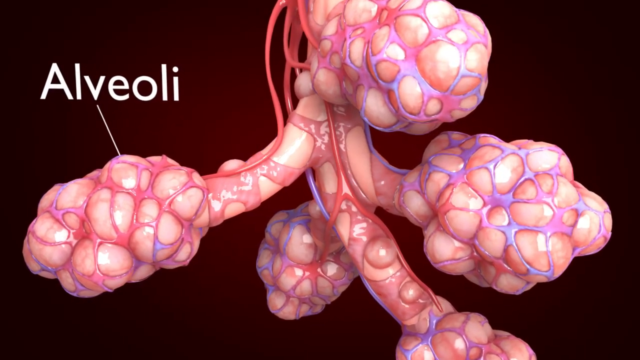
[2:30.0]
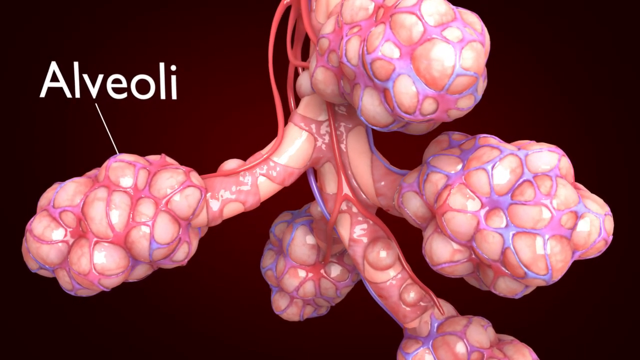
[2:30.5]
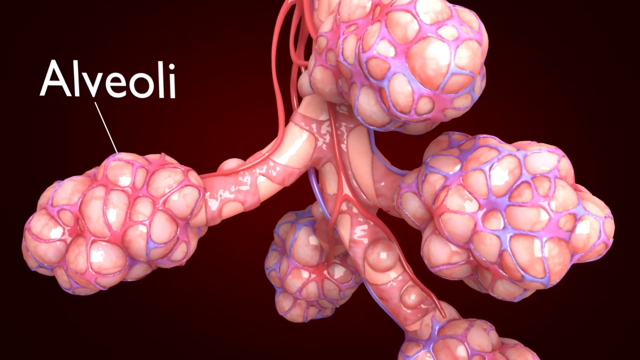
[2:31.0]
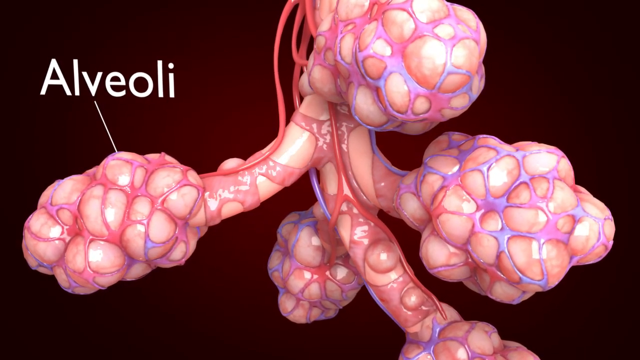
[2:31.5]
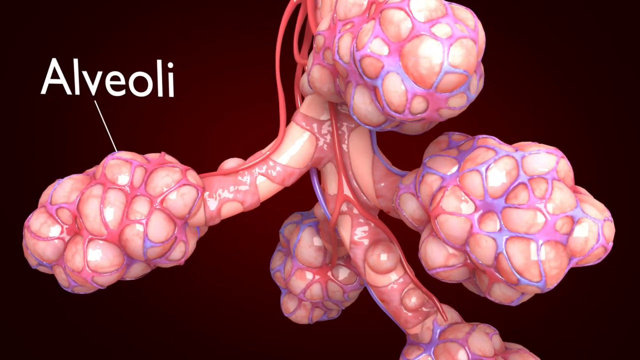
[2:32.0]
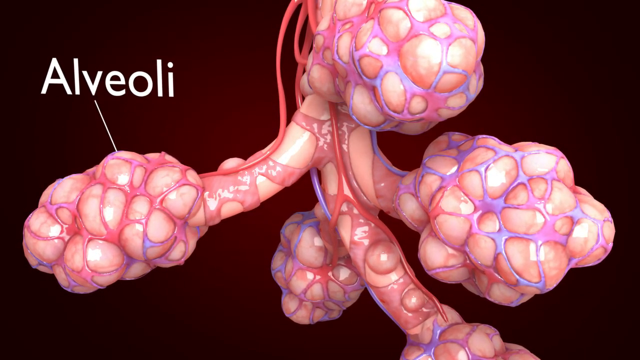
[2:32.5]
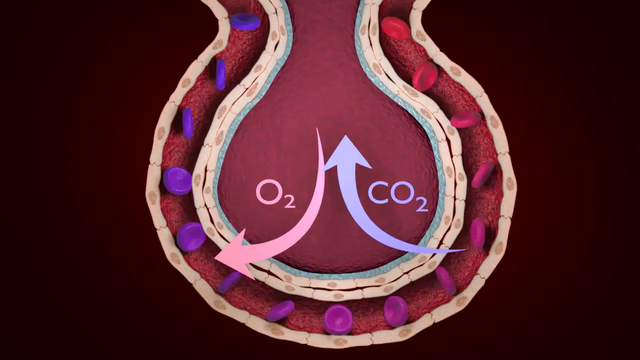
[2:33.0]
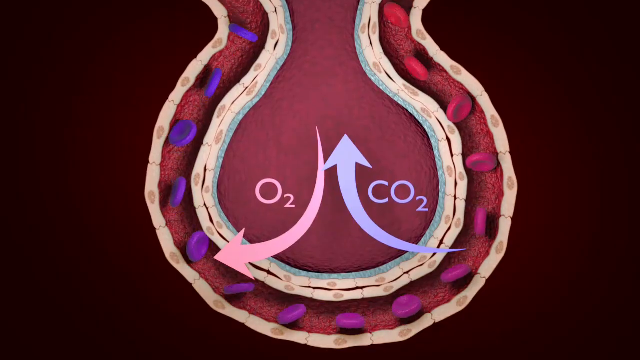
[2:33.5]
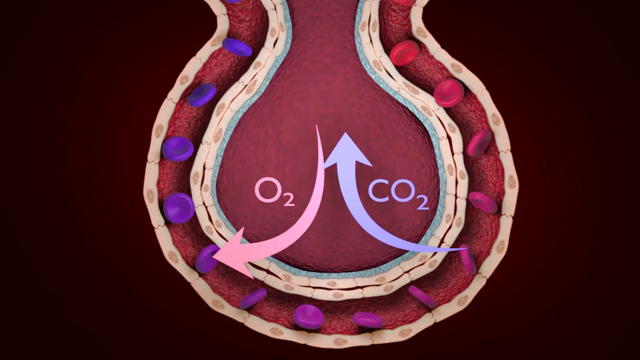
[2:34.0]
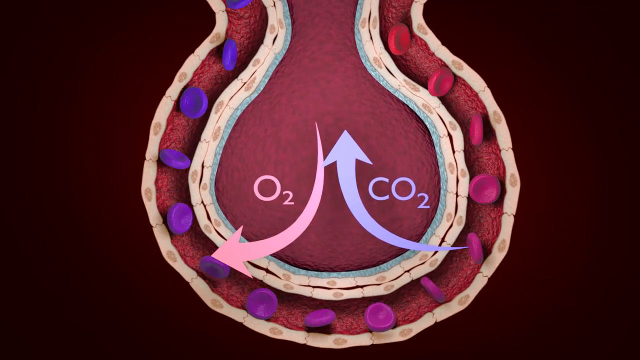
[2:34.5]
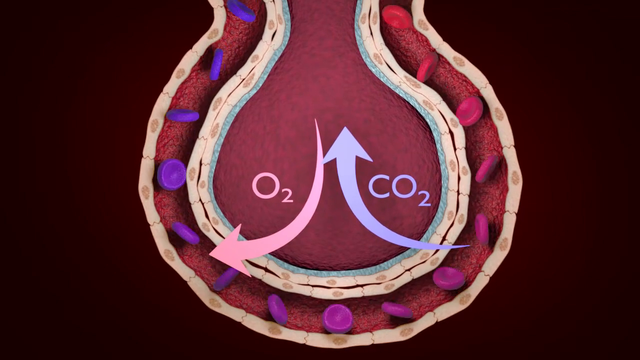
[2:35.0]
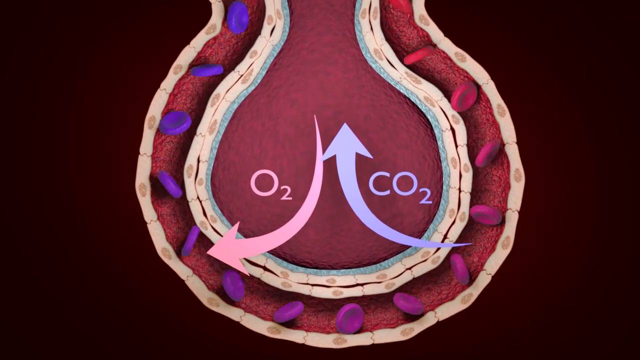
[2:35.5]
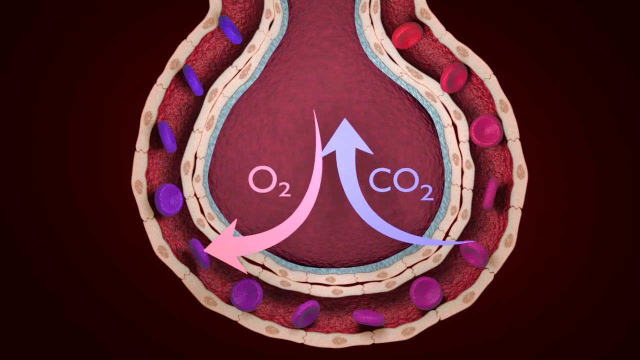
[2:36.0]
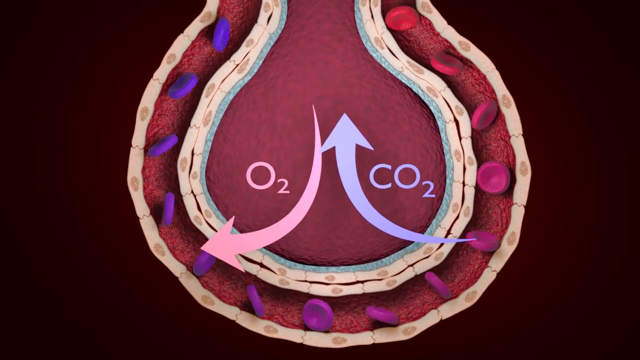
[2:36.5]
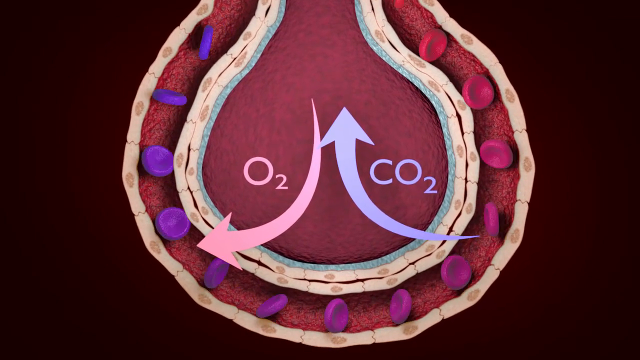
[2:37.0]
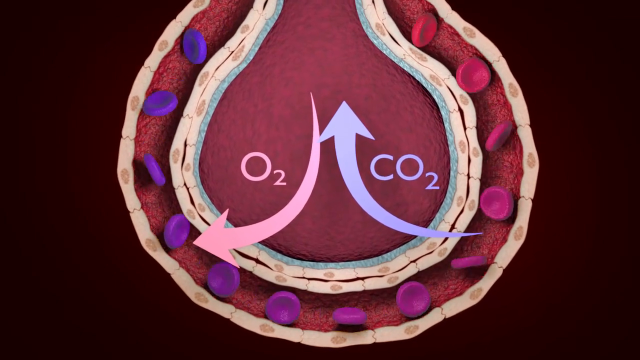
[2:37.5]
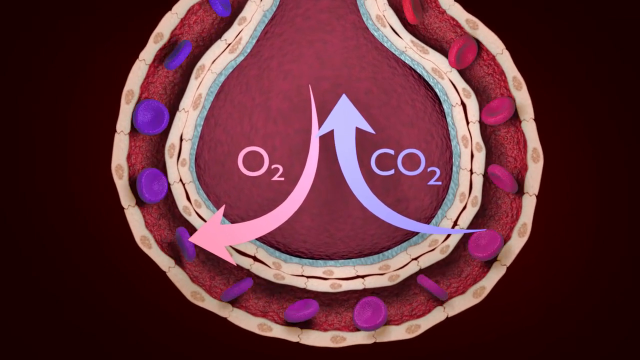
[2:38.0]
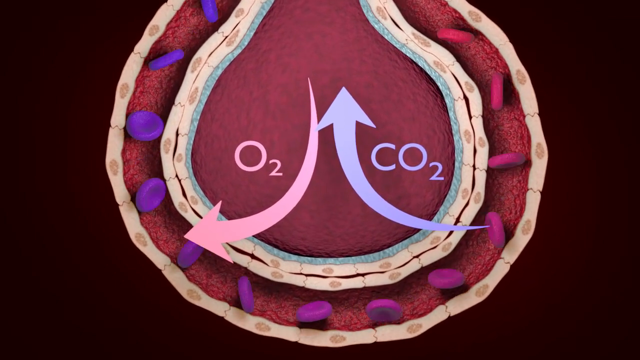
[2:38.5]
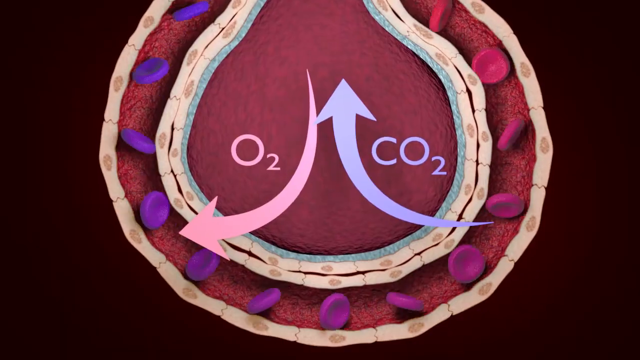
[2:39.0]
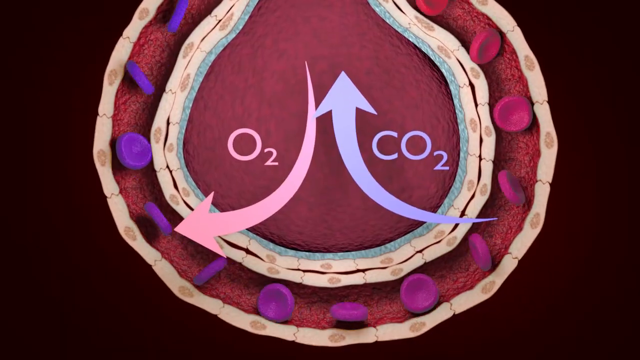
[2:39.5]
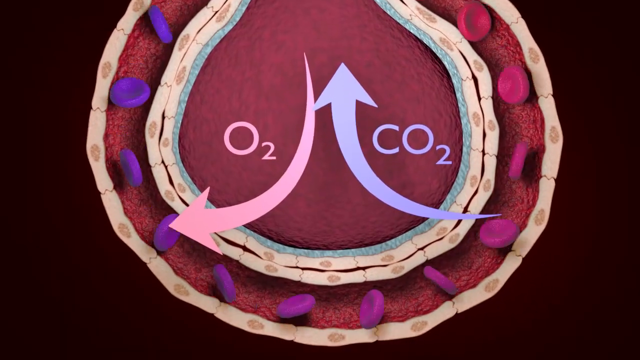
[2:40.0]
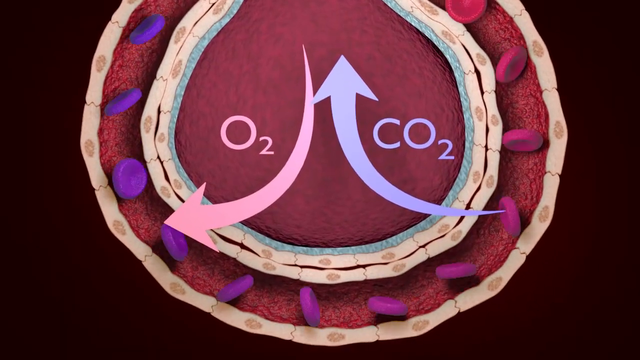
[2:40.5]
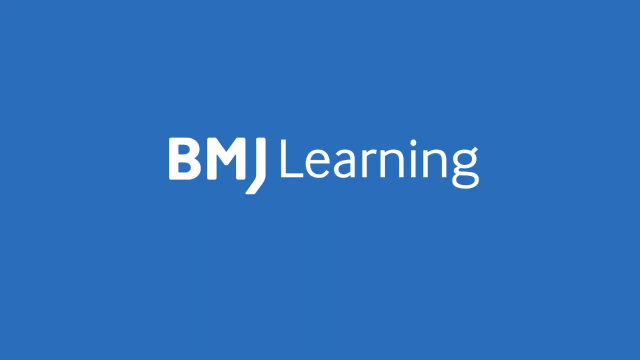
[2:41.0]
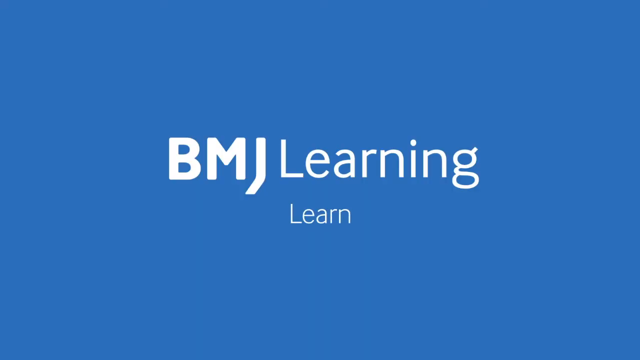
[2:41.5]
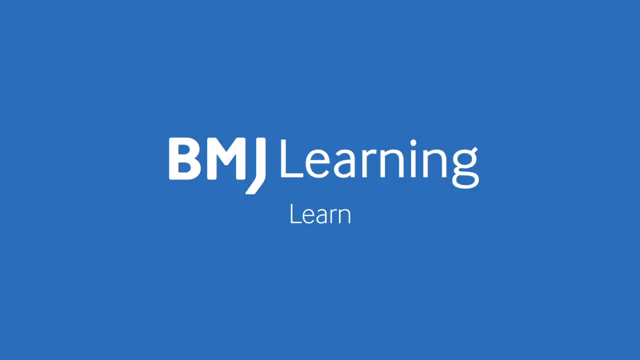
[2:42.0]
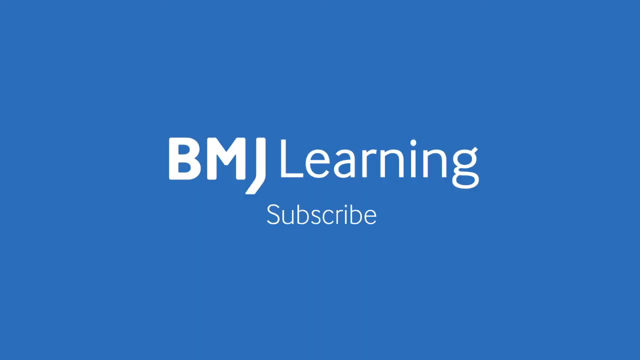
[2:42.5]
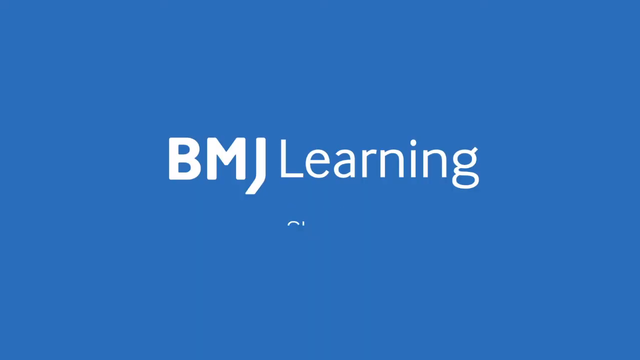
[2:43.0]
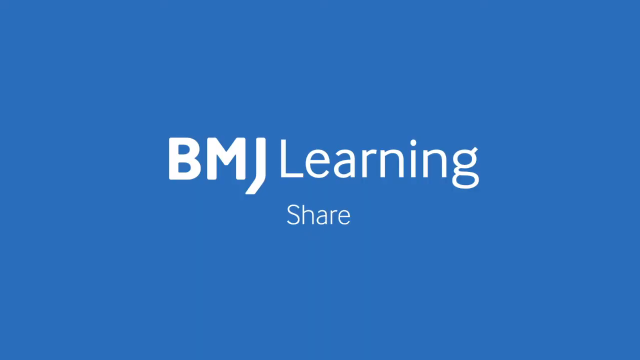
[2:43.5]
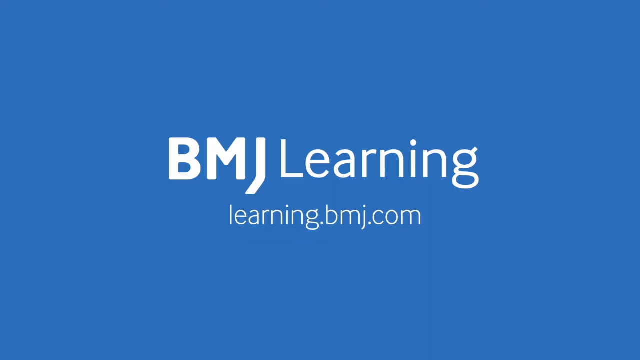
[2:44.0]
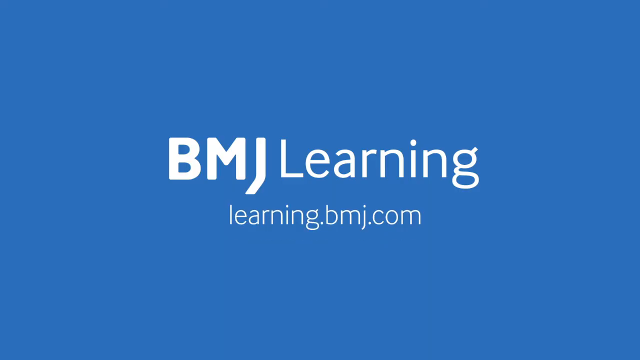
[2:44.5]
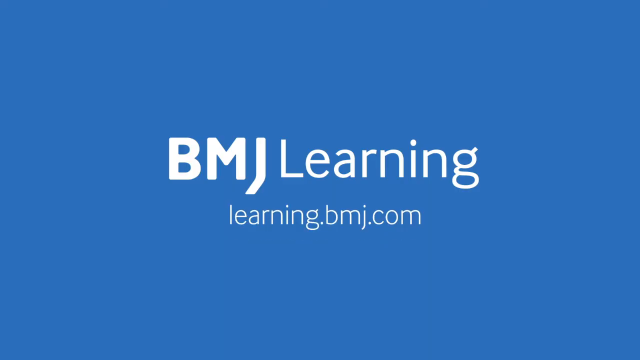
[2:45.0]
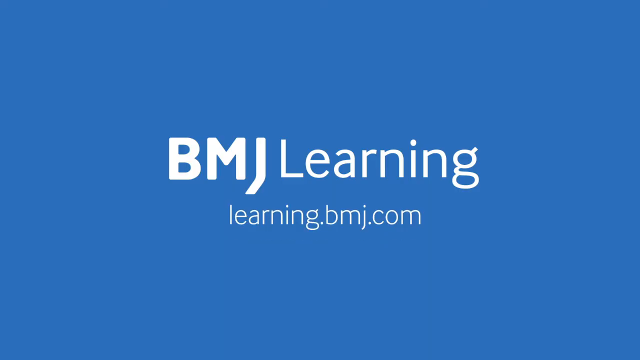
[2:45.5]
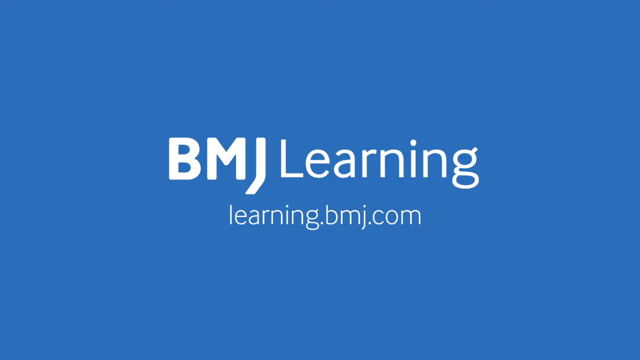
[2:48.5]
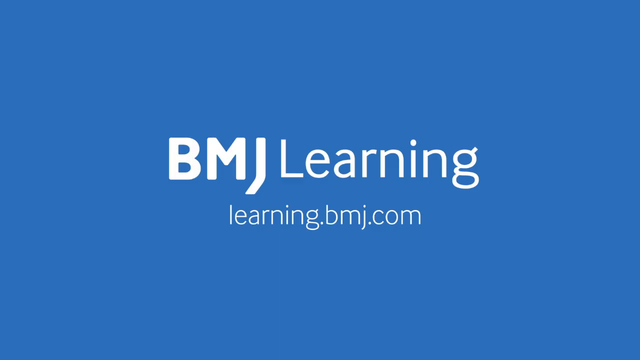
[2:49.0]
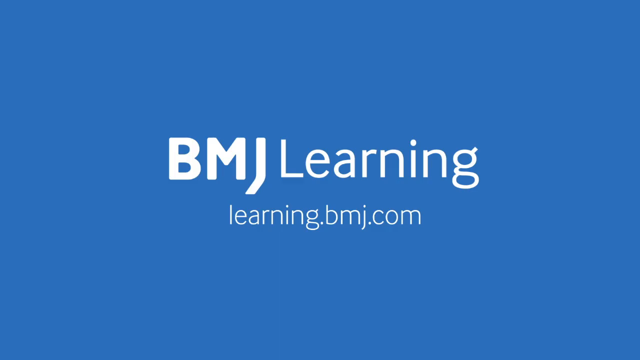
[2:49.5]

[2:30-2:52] A graphic shows the alveoli inside the human lungs as five clusters of pink bumps surrounded by purple and red strings that look like veins and arteries. One cluster is labeled "alveoli" with a white line pointing toward it. Next comes a graphic of what looks like a channel with purple and red cells moving through it, purple on the left side and red on the right. The cells come down one side, go around a circular bend at the bottom and go up the other side, changing from purple to red as they move. In the center of the image a pink arrow points downward with "O2" next to it, and on the opposite side a blue arrow points upward with "CO2". At the end, the words "BMJ Learning" appear in front of a blue backdrop, the words "learn", "subscribe" and "share" pop up underneath one at a time, and finally "learning.bmj.com" appears.